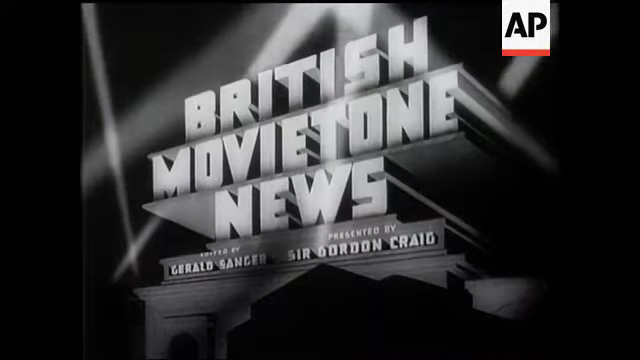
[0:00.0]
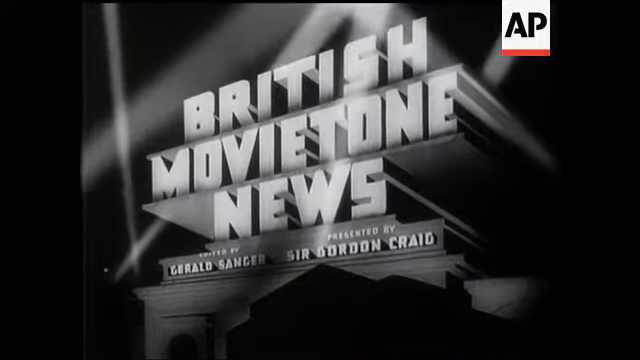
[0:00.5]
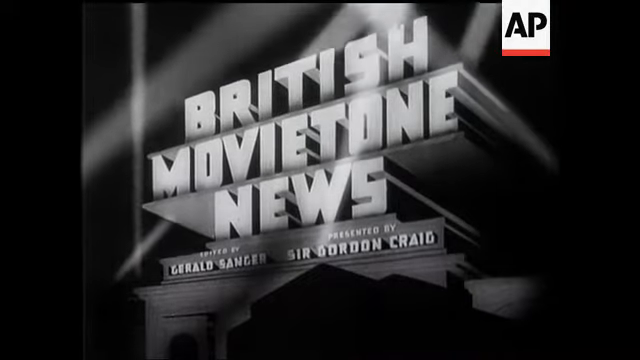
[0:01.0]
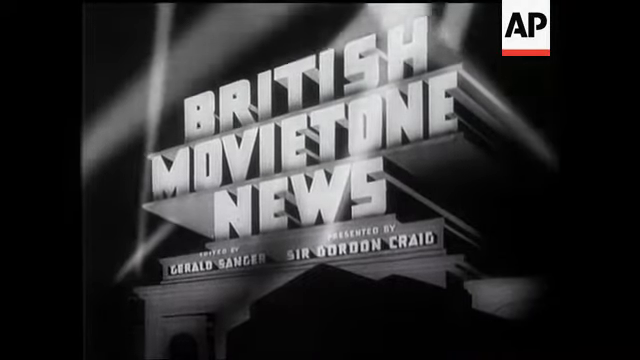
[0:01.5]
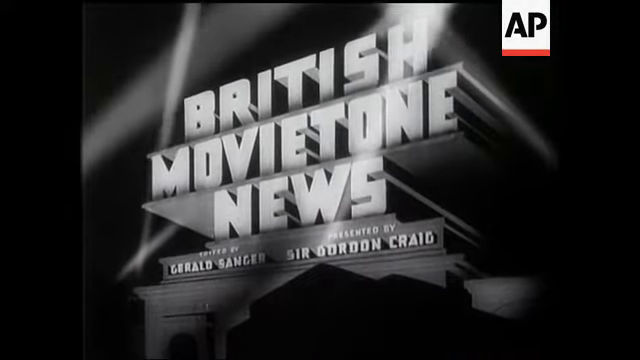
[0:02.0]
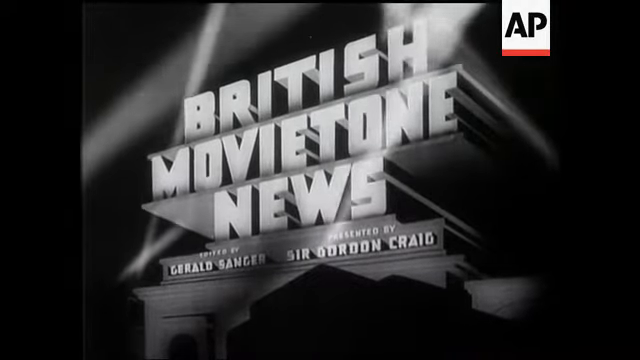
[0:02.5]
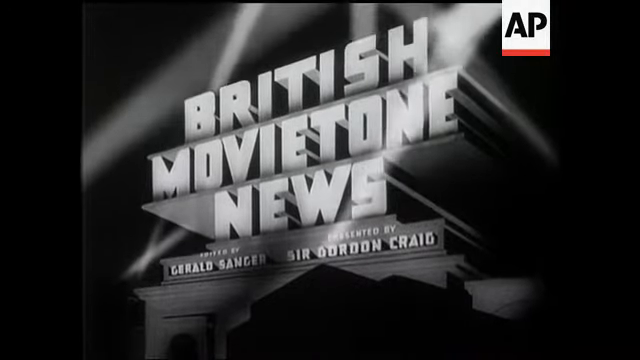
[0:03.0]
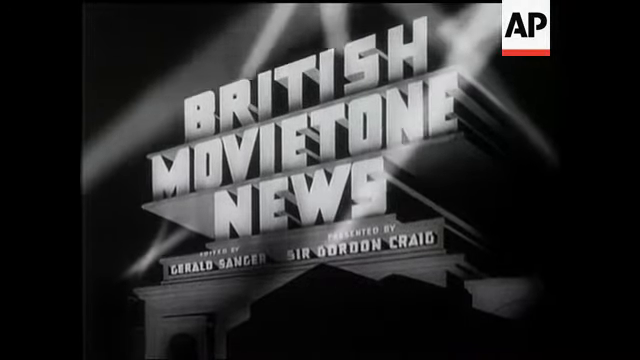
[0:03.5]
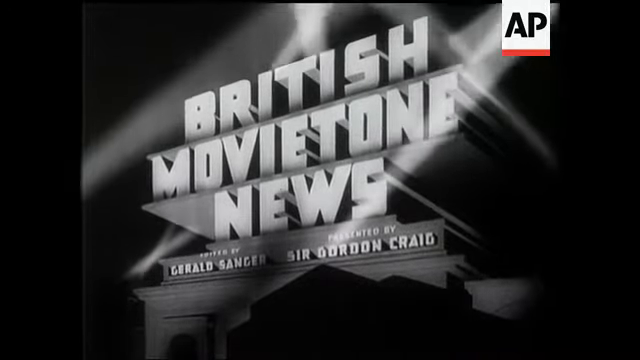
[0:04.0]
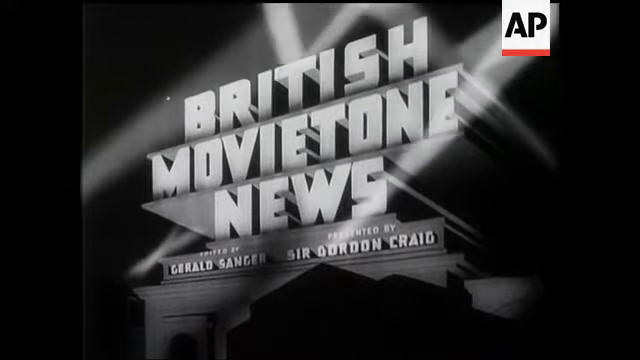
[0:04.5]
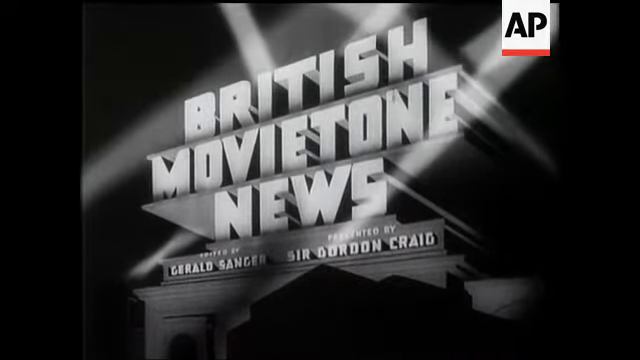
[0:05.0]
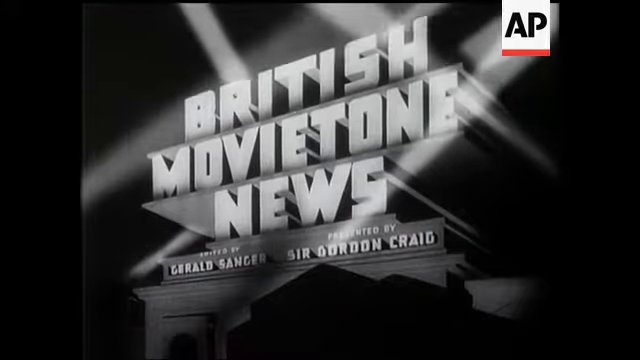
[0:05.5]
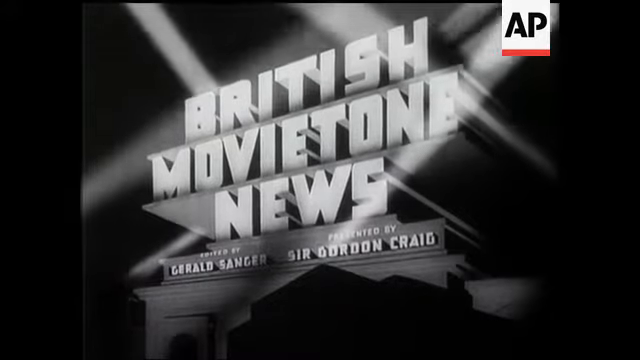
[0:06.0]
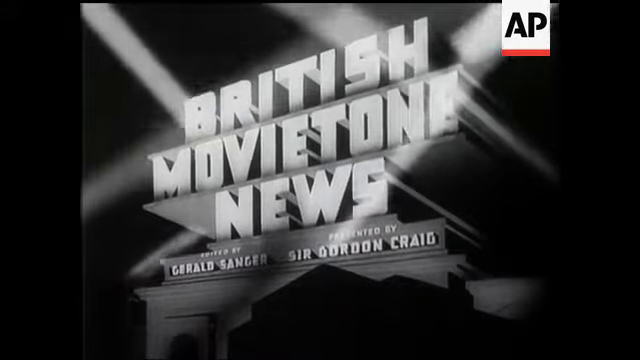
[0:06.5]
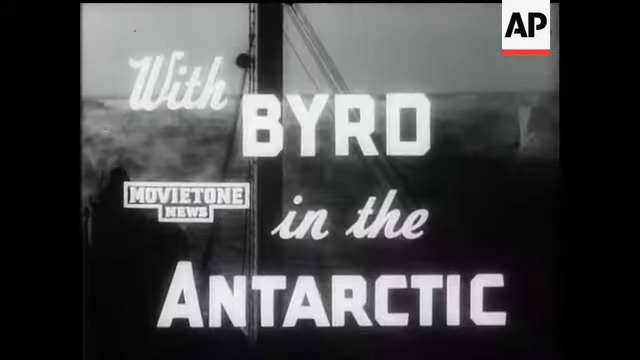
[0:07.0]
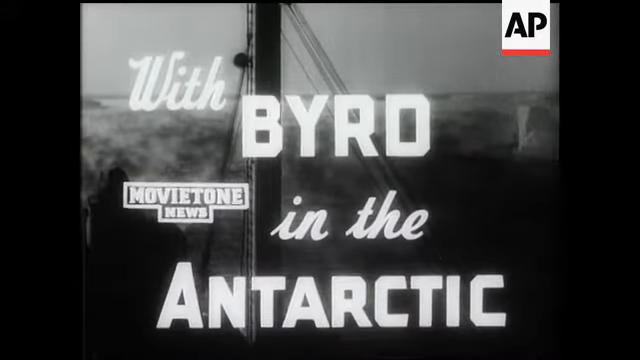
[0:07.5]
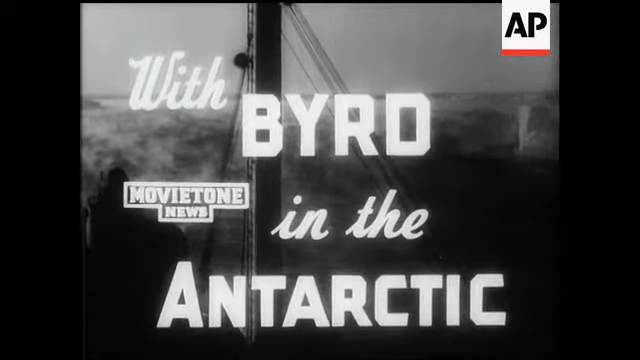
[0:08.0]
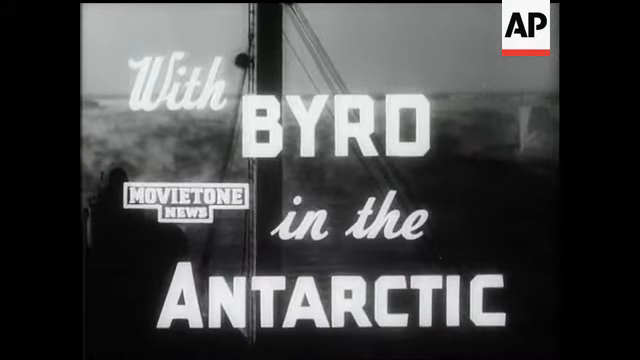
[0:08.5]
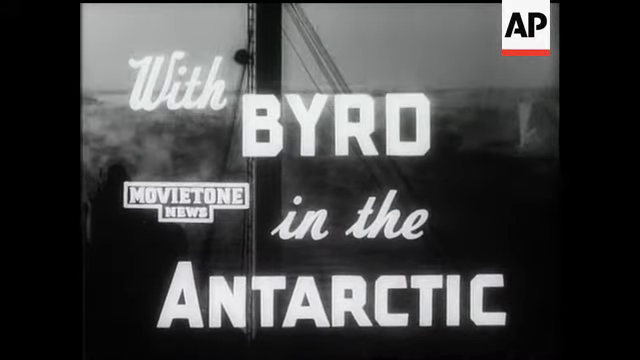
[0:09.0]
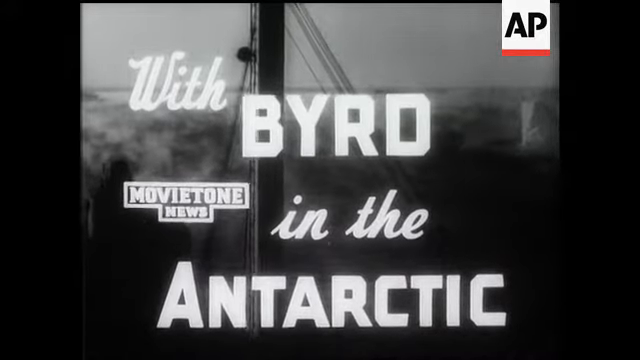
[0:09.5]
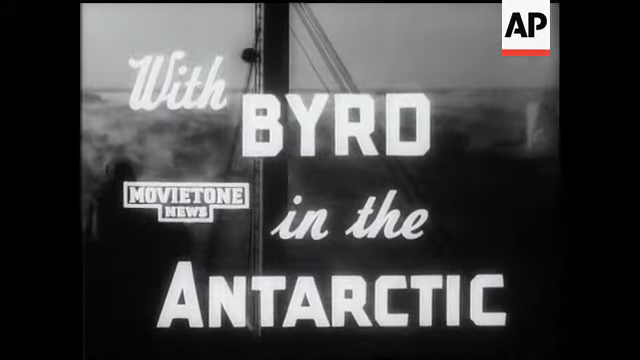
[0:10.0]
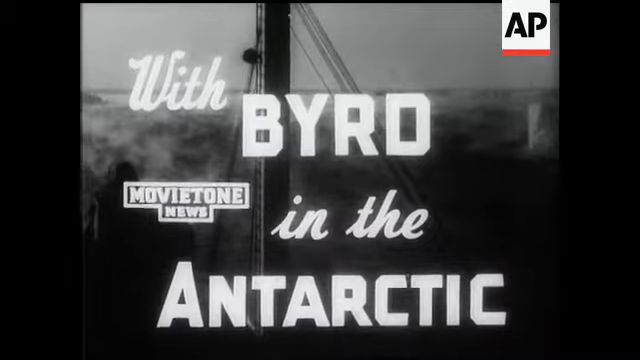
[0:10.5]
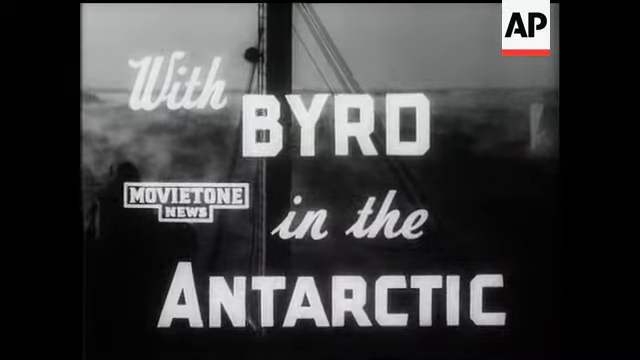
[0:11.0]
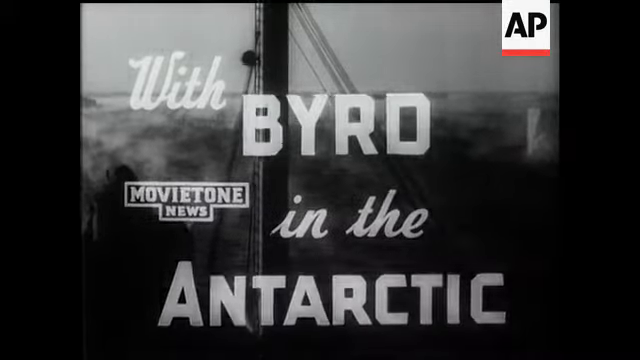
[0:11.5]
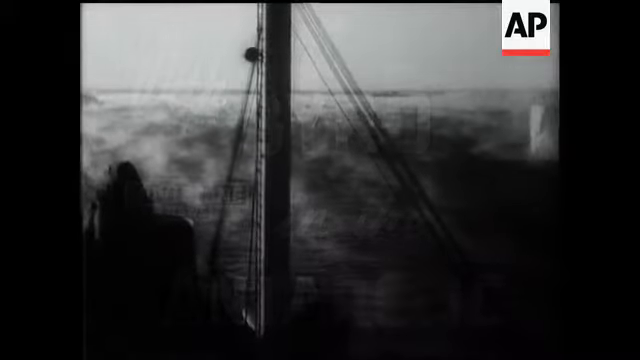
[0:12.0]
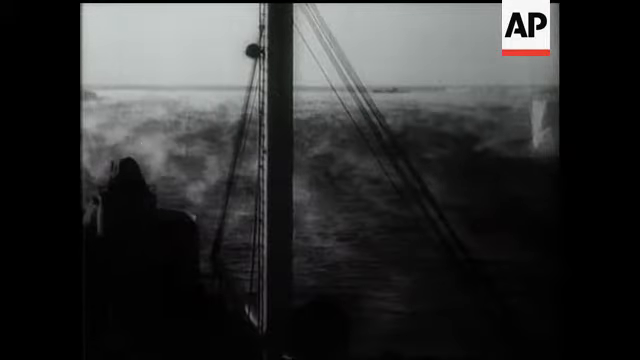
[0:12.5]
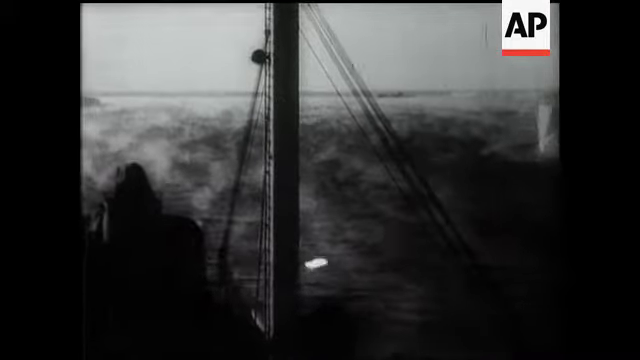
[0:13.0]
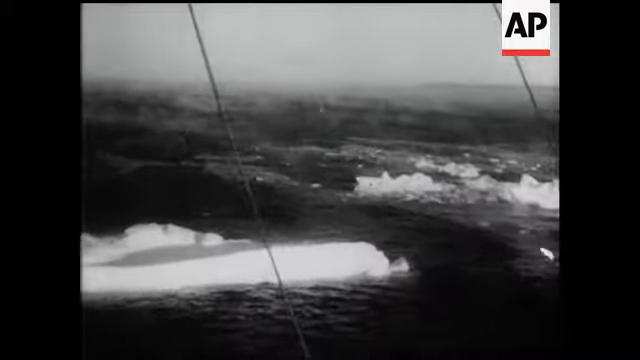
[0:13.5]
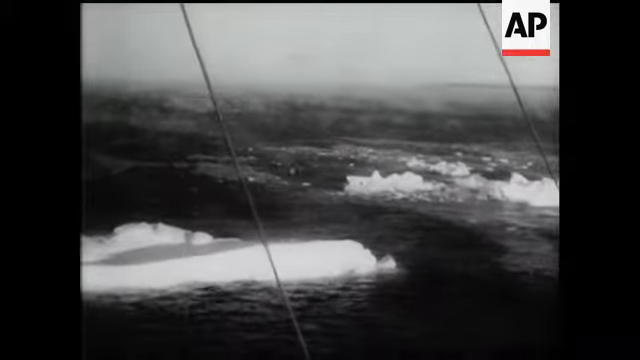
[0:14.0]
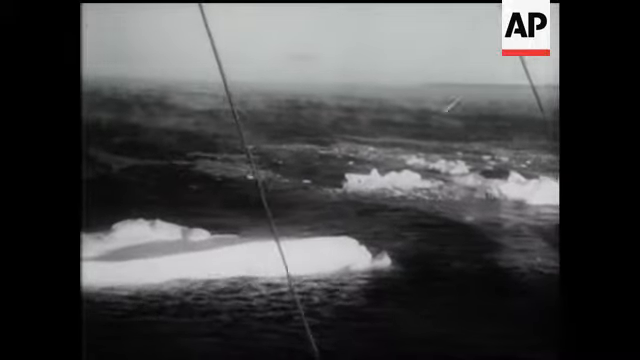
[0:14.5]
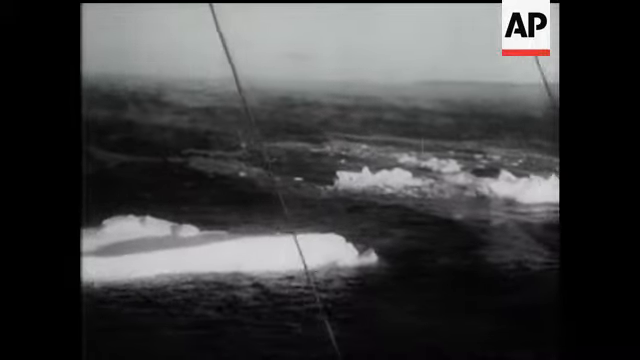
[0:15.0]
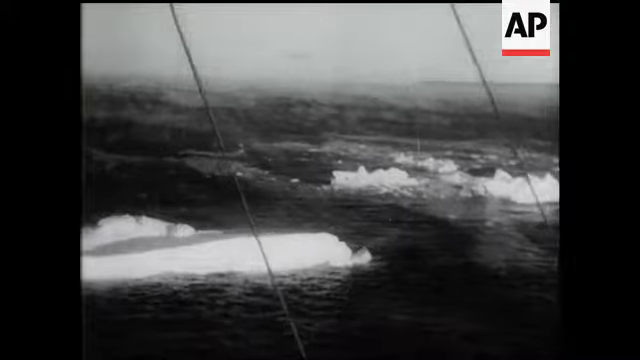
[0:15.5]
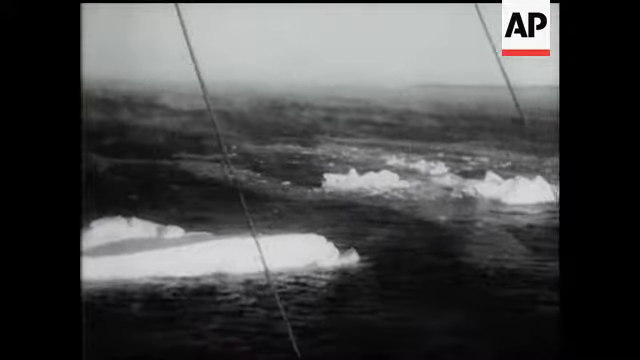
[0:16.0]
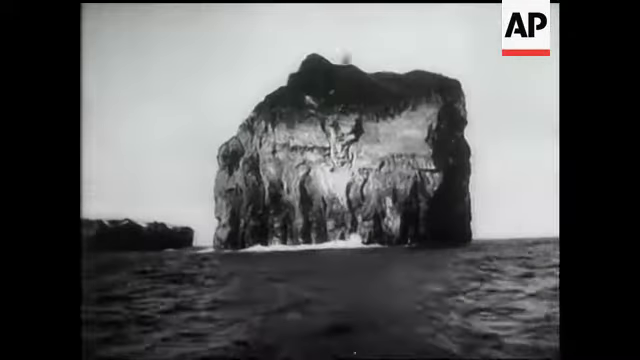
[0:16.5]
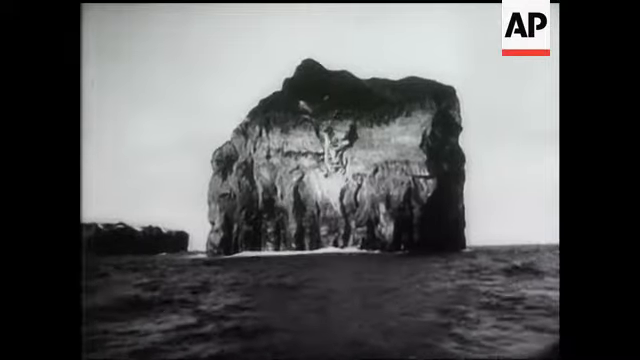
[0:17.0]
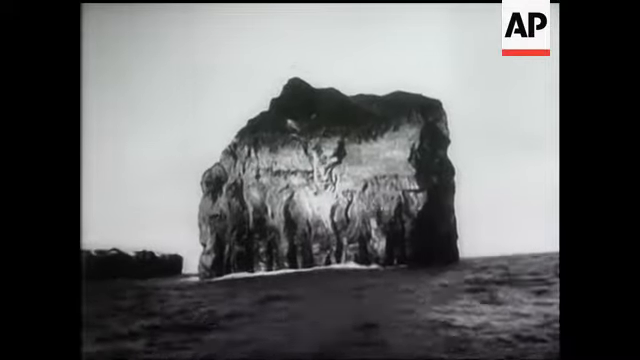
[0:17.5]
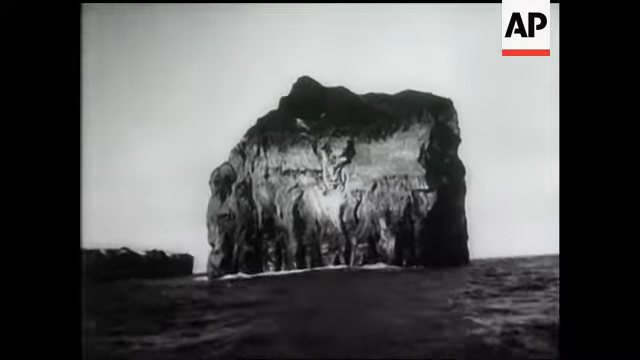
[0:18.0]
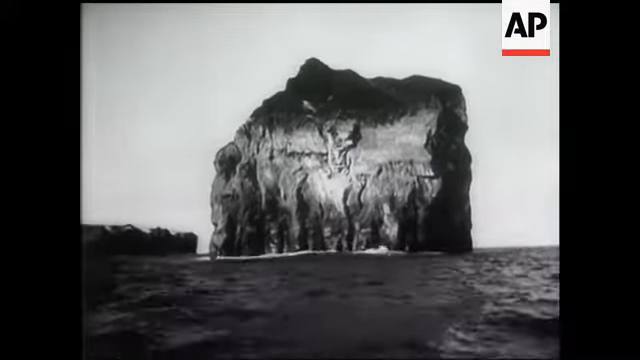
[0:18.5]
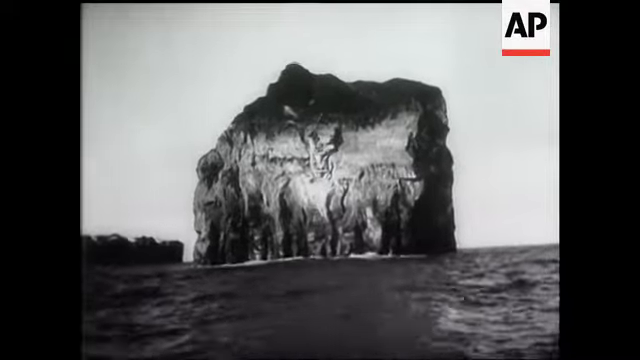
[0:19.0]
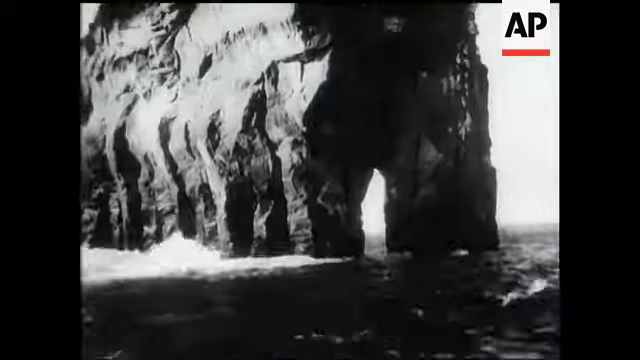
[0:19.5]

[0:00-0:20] The British Movietone News logo appears at the start, and it shows that the editor is Gerald Sanger and the presenter is Sir Gordon Craig. Behind the logo, searchlights move around the sky. The item is titled "With Byrd in the Antarctic." The footage is black-and-white film. It first shows what appears to be the deck of a ship looking out onto a very cold, rough sea, with small bits of pack ice floating on the surface. The ship carrying the cameraman sails past a stack of rock in the sea that is not particularly large but is nearly vertical. As the ship sails round it, part of the stack is seen to have eroded away, leaving an arch.